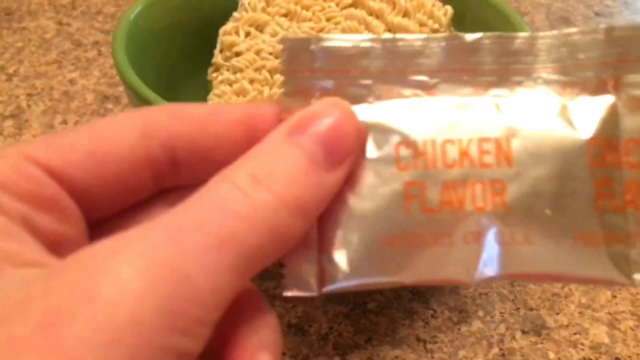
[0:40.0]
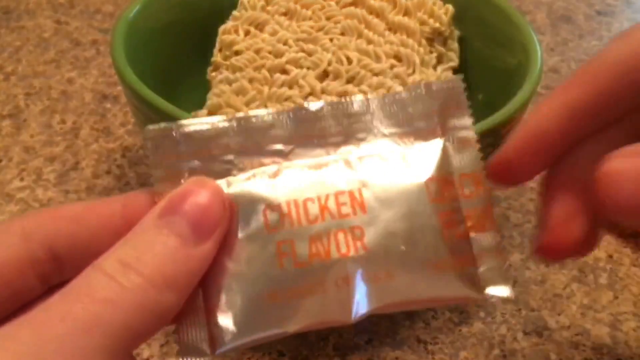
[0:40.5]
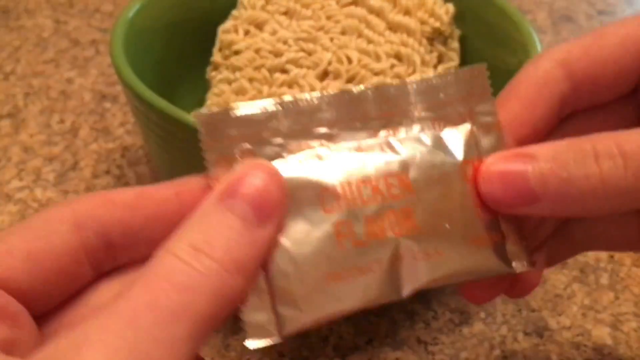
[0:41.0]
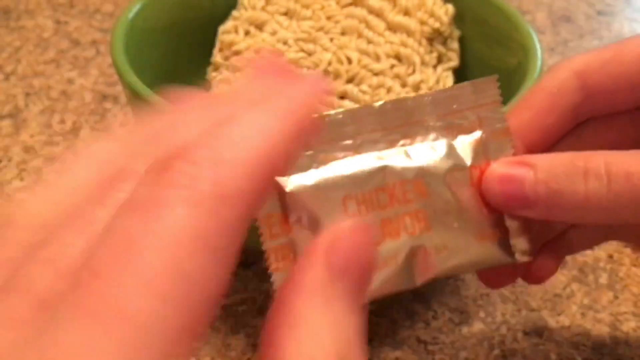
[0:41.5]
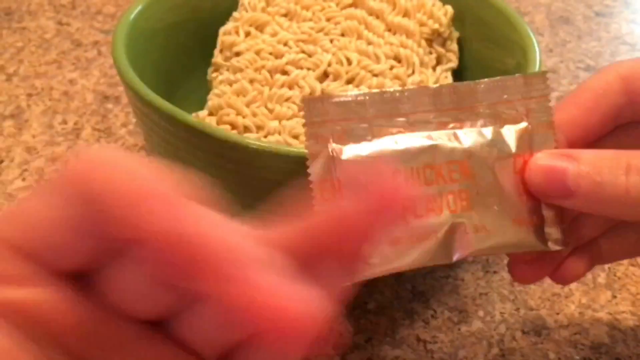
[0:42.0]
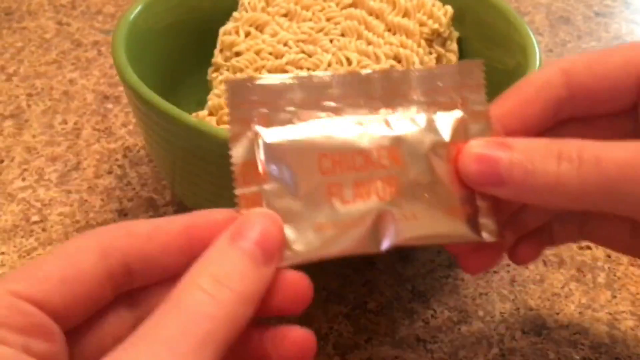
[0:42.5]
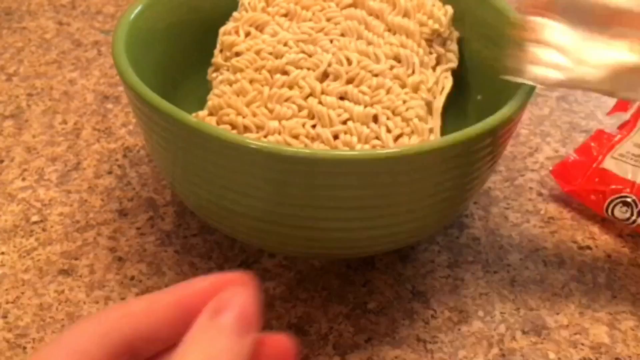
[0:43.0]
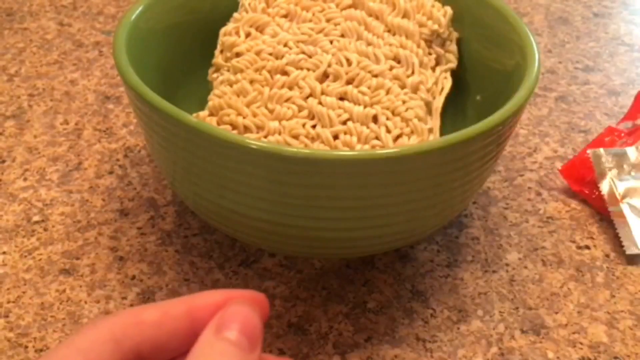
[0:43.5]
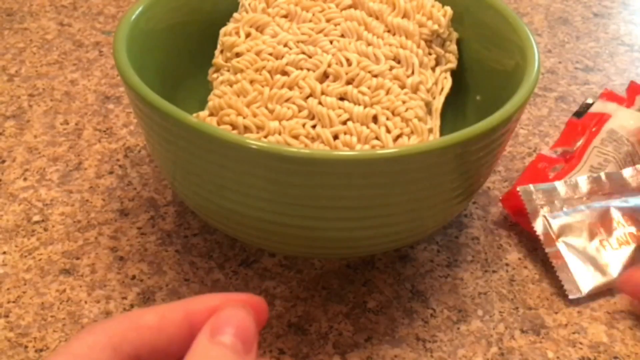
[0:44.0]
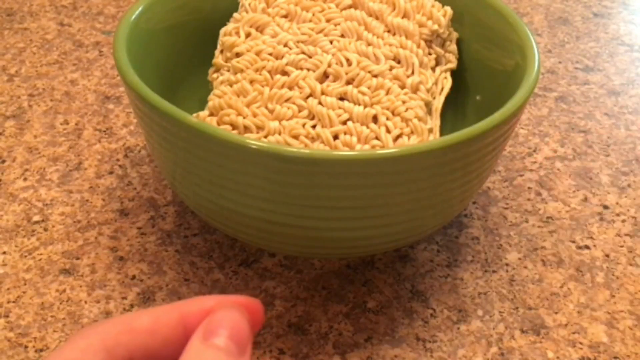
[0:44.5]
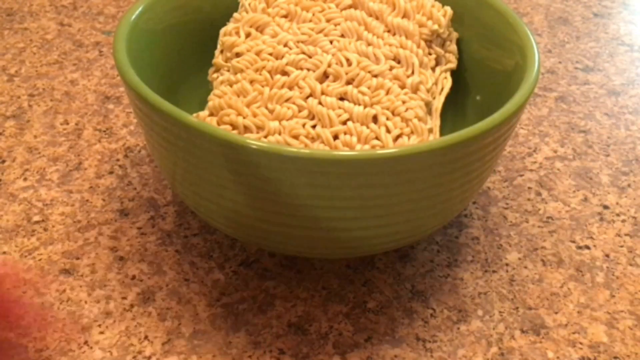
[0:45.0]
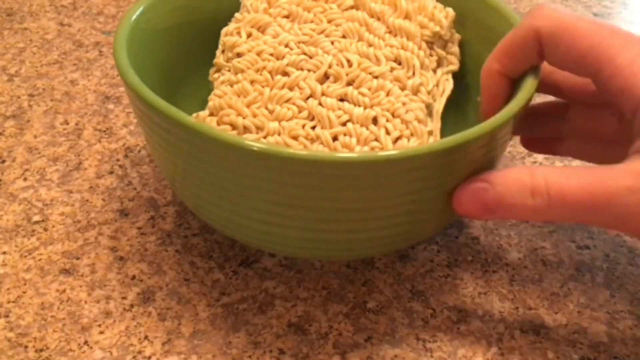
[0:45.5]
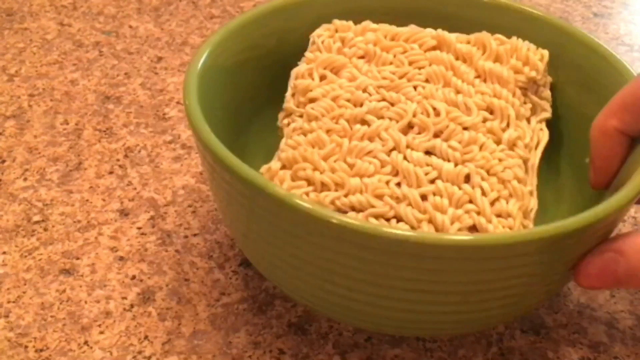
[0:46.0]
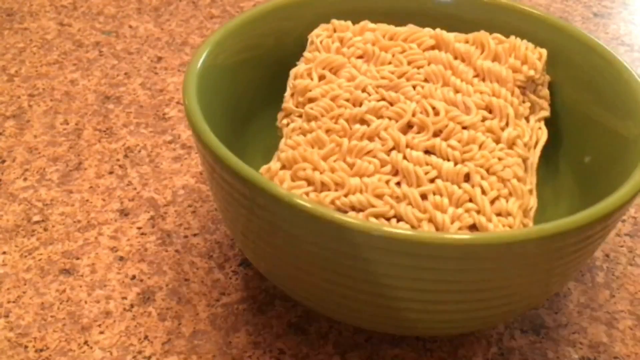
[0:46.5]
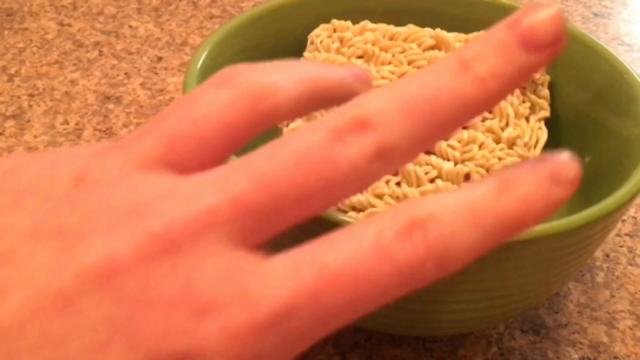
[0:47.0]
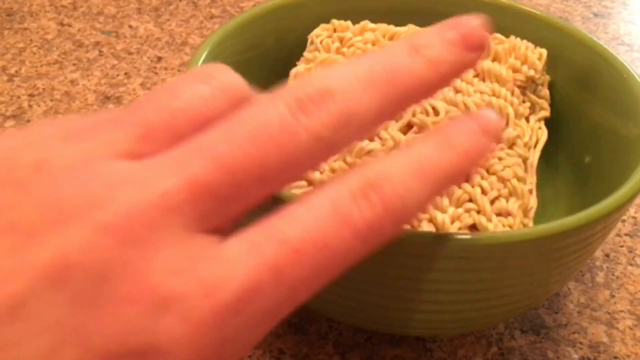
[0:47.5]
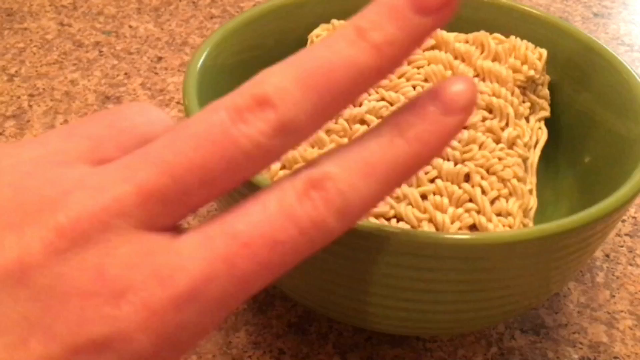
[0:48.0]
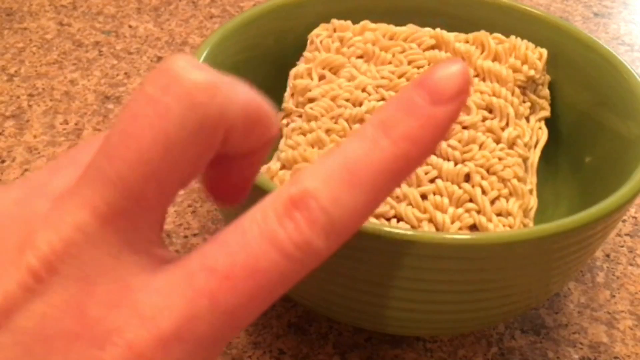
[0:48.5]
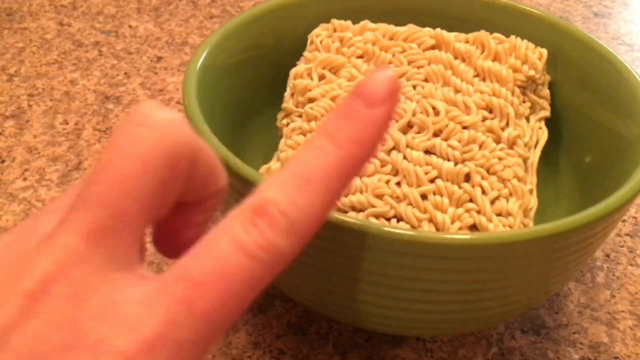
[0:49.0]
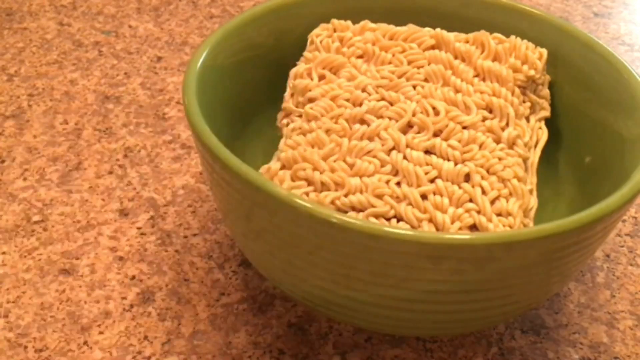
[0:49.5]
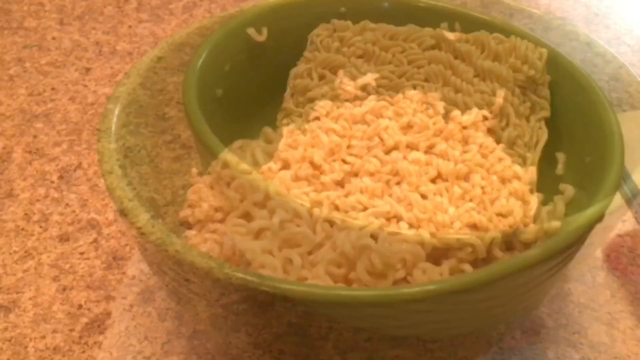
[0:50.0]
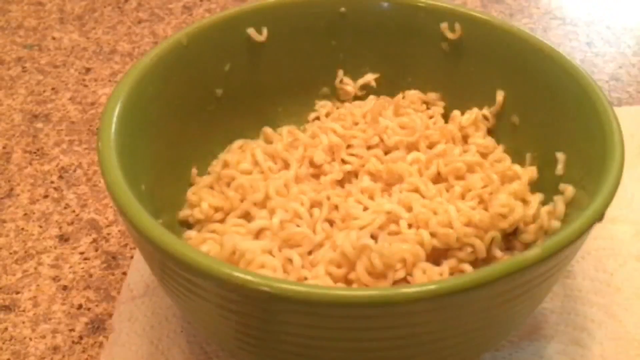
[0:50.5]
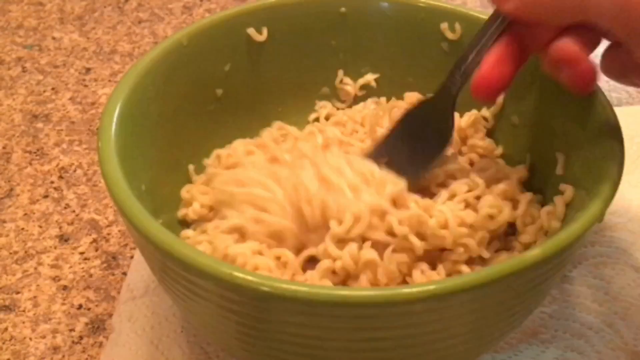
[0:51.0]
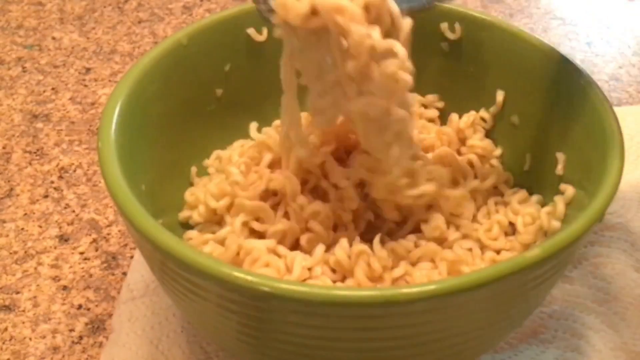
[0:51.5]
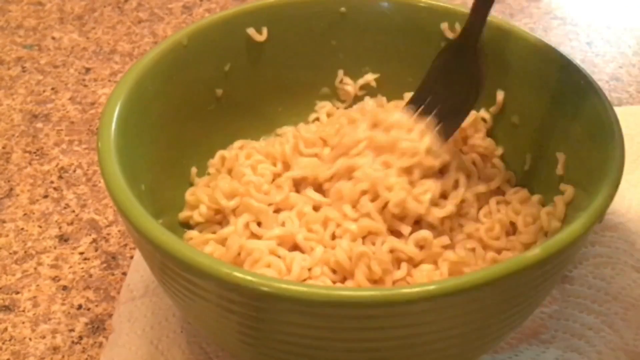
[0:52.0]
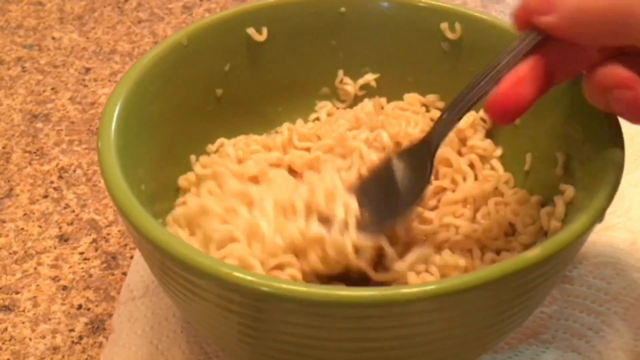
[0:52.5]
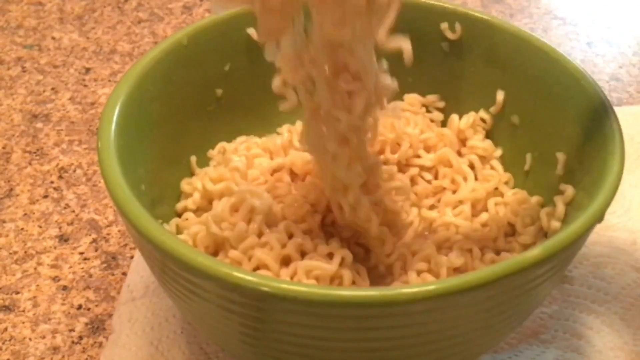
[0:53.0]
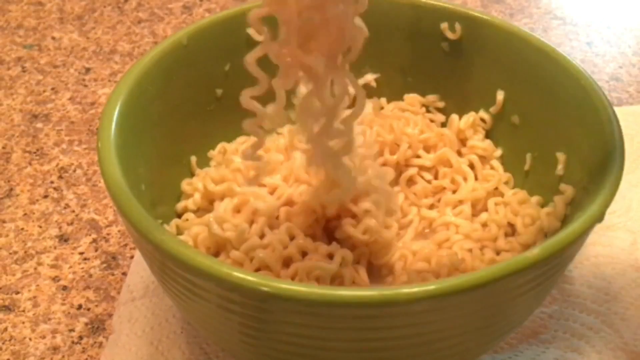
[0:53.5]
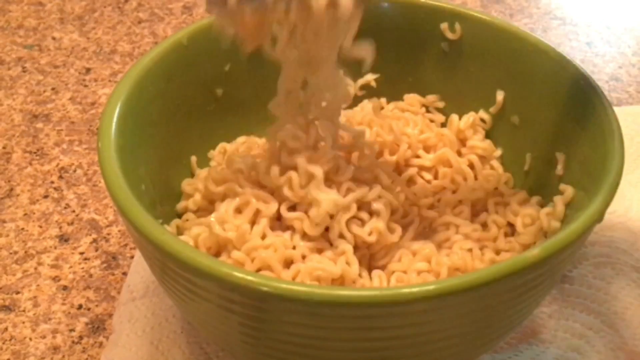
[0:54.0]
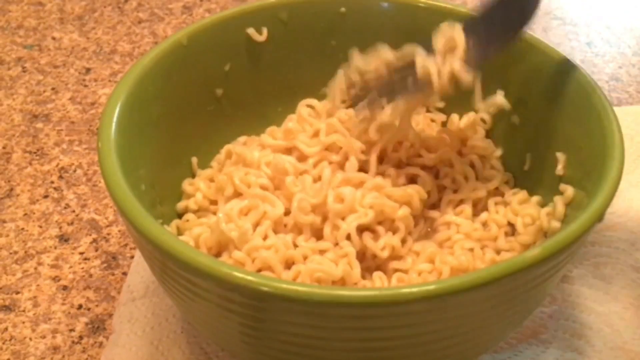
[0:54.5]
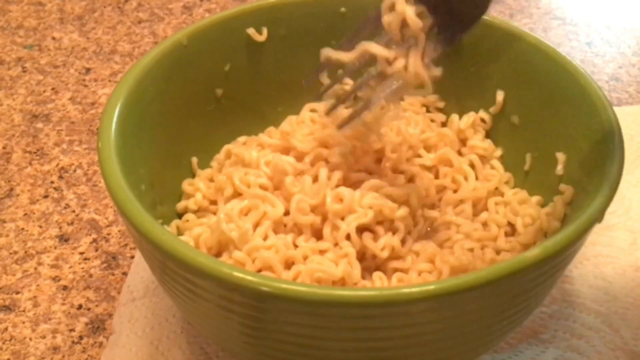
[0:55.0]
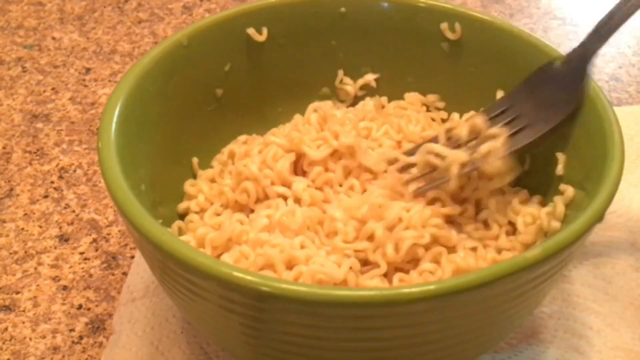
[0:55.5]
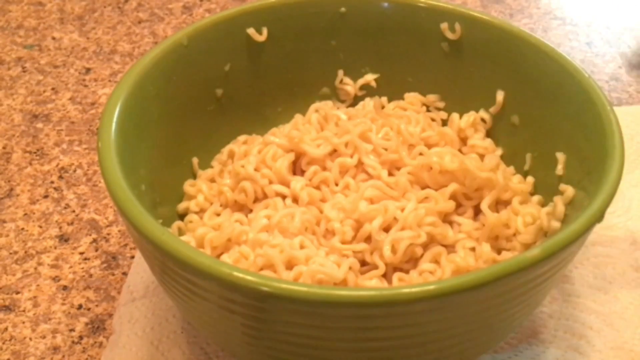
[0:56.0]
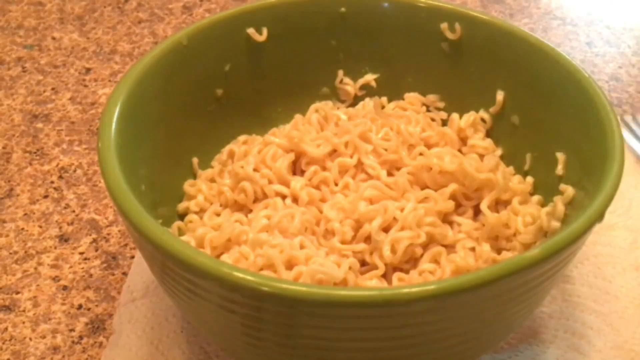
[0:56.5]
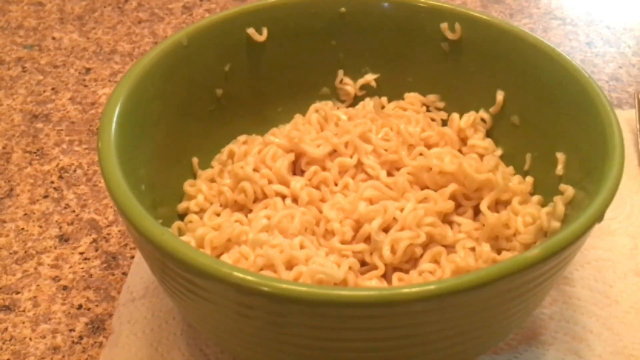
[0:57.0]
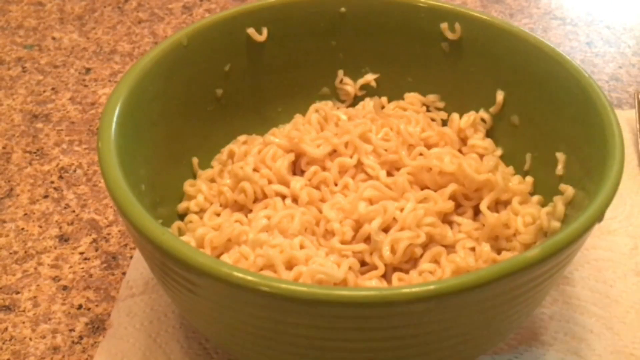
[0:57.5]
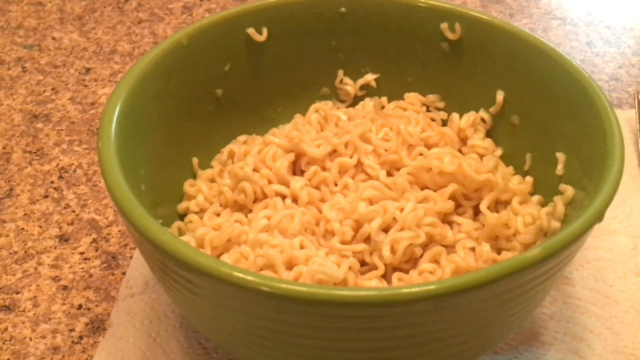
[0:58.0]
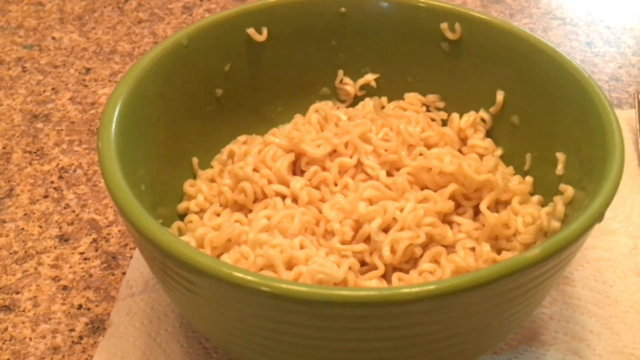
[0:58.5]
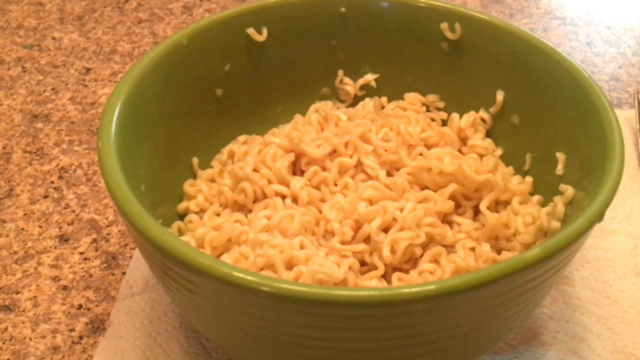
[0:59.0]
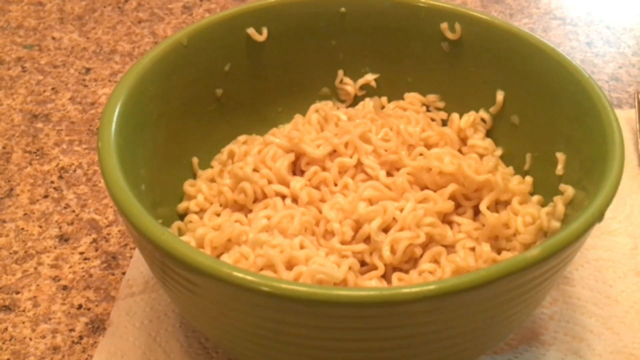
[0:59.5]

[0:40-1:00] The same person in the buttoned-down yellow shirt shows the Flaming Hot Cheetos bag on the left, the chicken ramen noodle package on the right, and the green ceramic bowl in the center, and gives a thumbs up. They open the ramen package on the right side, place the noodles inside the green ceramic bowl, show the chicken flavor packet, and set it aside to the right. They pull the bowl closer with the right hand and signal 2, 1 with their fingers. Wet noodles then appear, with a fork mixing them about. The chicken packet is shown and pushed to the side, followed by a 3, 2, 1 count and the wet noodles being mixed about with the fork. A paper towel is now under the green ceramic bowl, whereas before the bowl was just on the granite countertop.